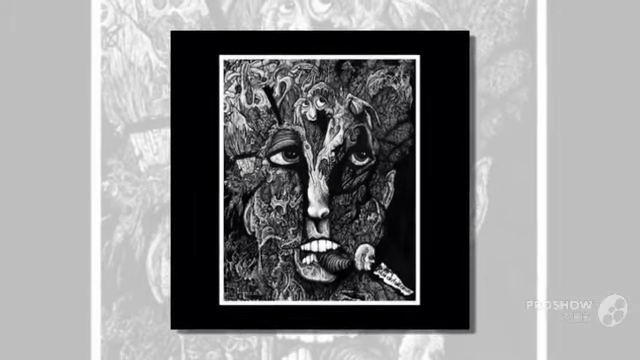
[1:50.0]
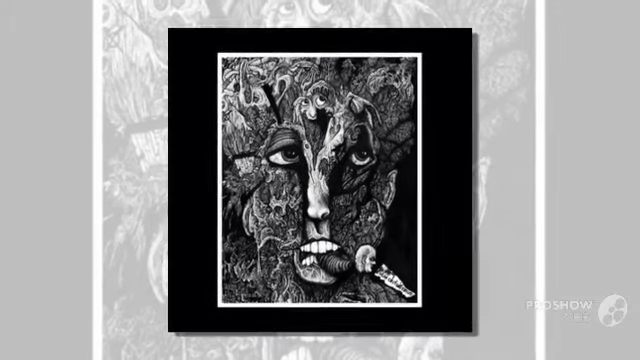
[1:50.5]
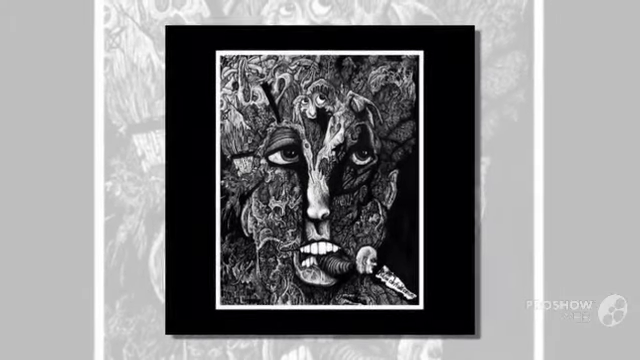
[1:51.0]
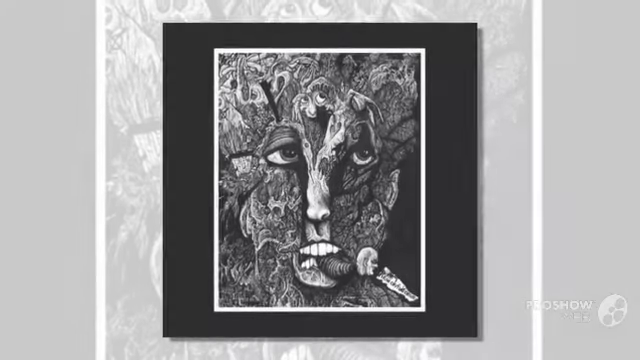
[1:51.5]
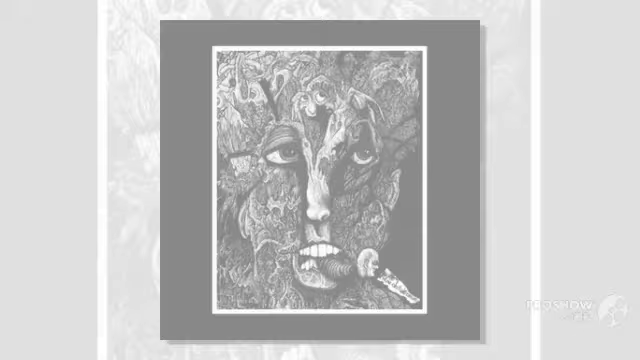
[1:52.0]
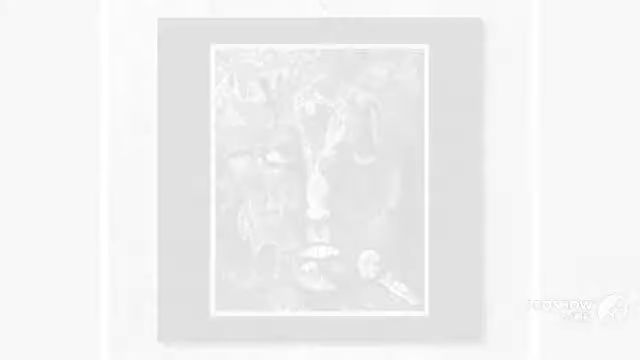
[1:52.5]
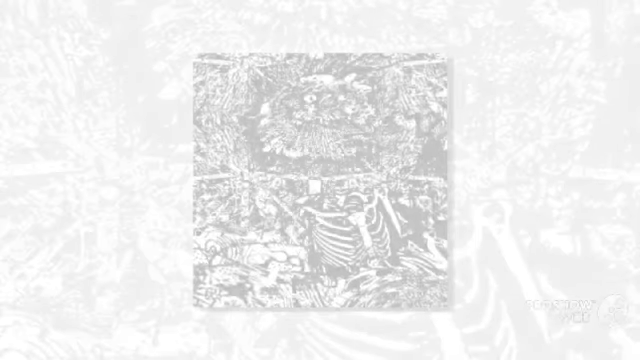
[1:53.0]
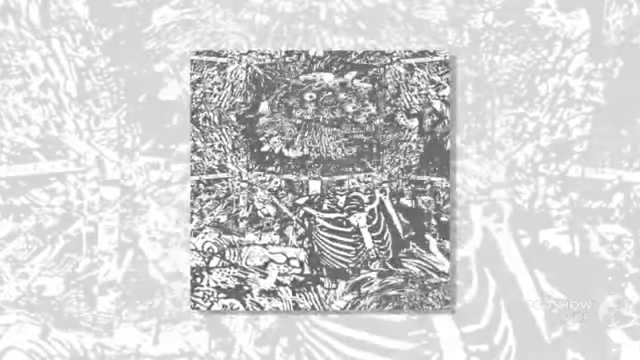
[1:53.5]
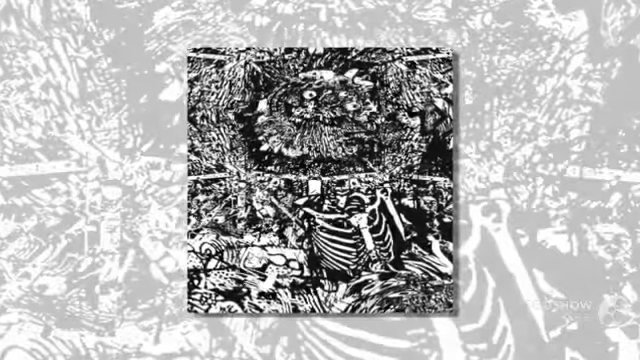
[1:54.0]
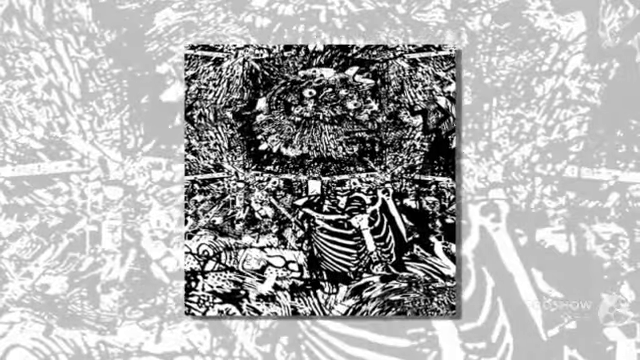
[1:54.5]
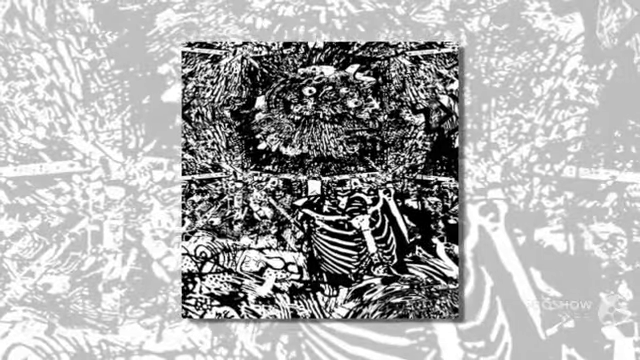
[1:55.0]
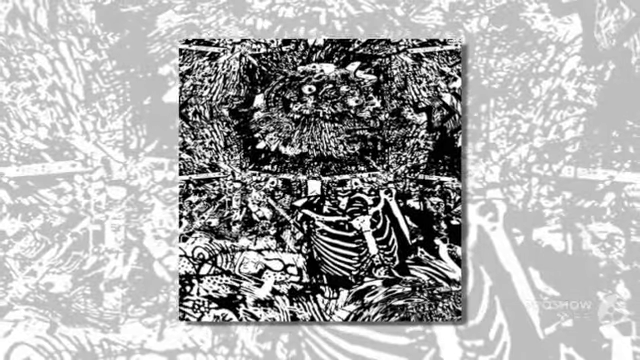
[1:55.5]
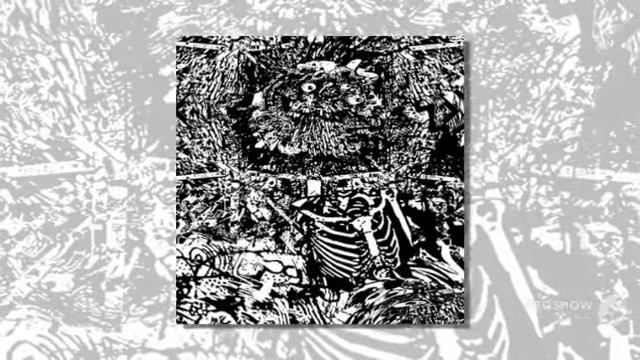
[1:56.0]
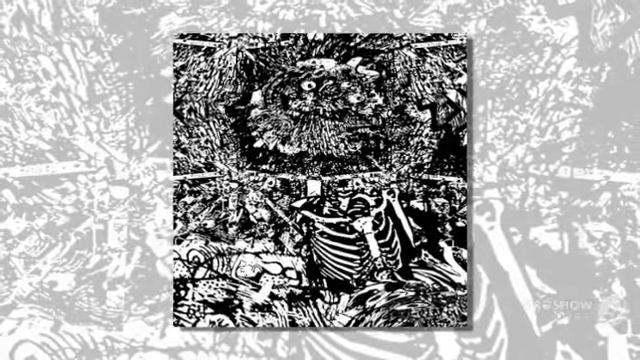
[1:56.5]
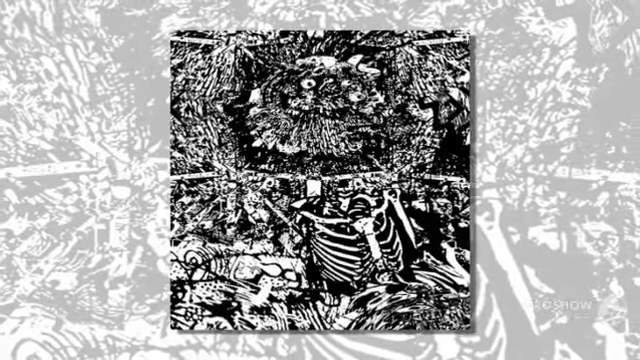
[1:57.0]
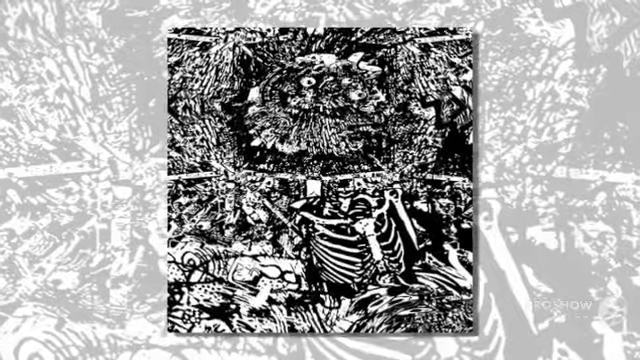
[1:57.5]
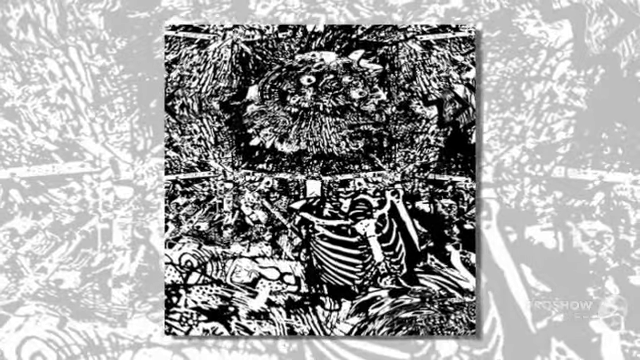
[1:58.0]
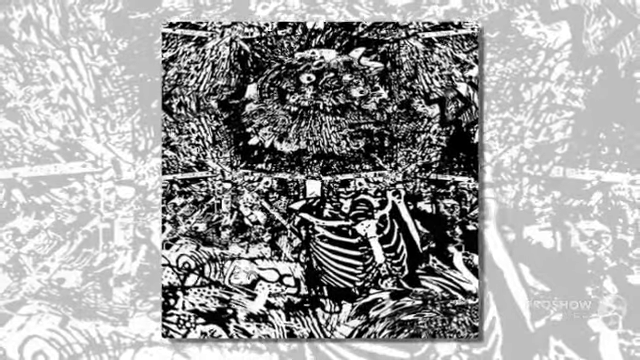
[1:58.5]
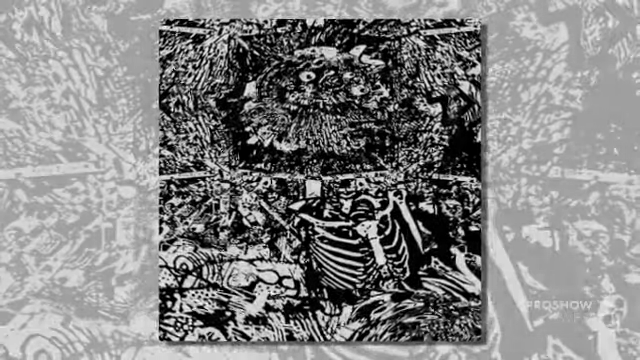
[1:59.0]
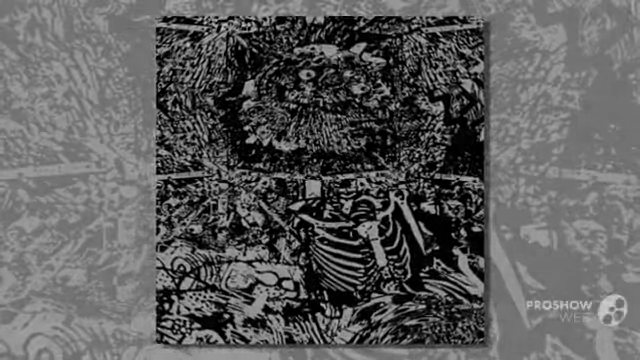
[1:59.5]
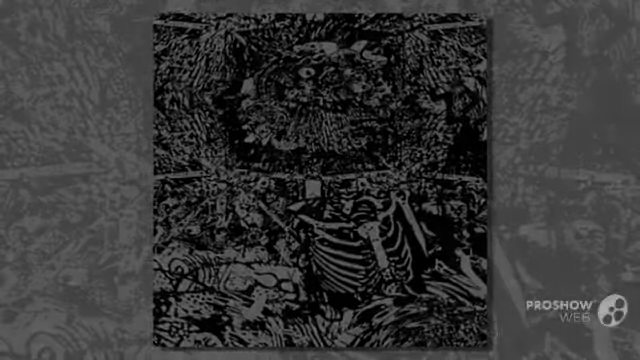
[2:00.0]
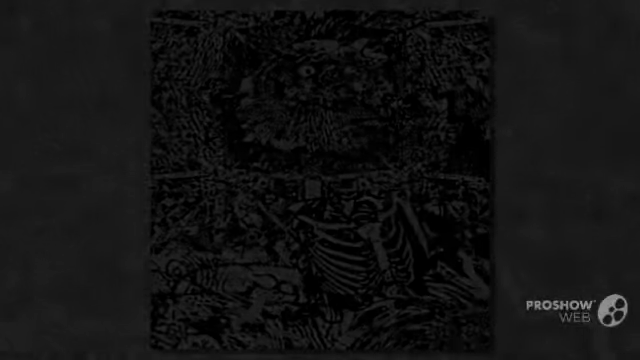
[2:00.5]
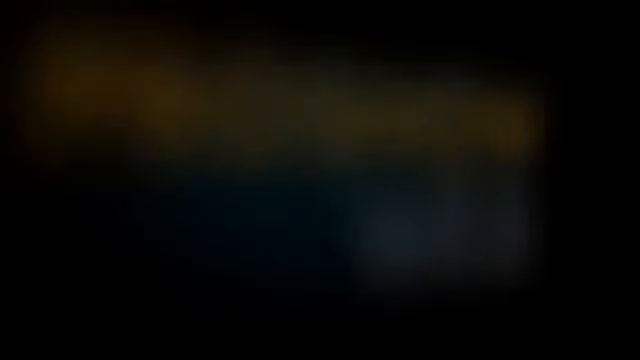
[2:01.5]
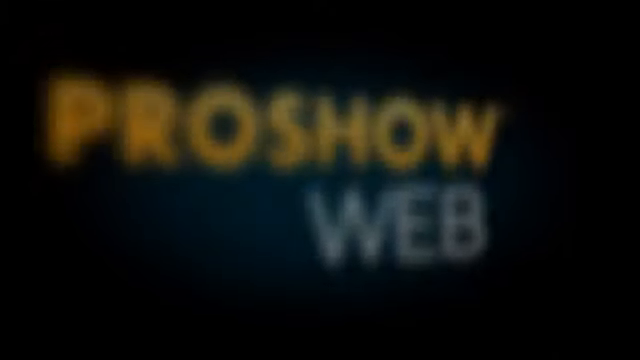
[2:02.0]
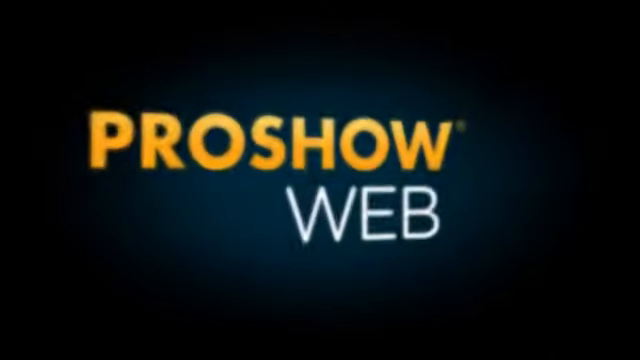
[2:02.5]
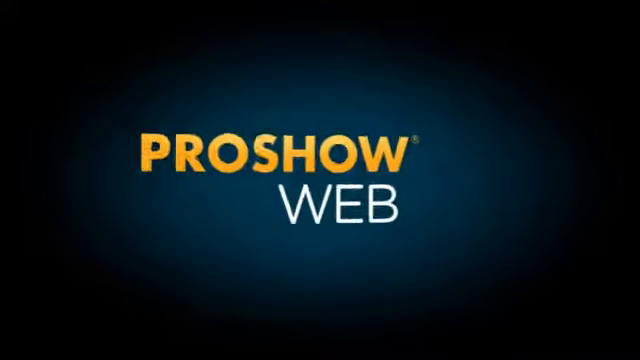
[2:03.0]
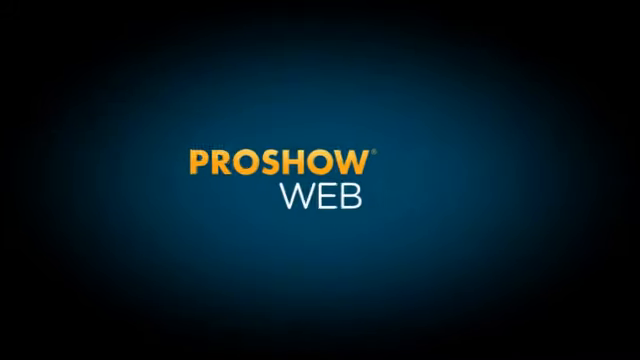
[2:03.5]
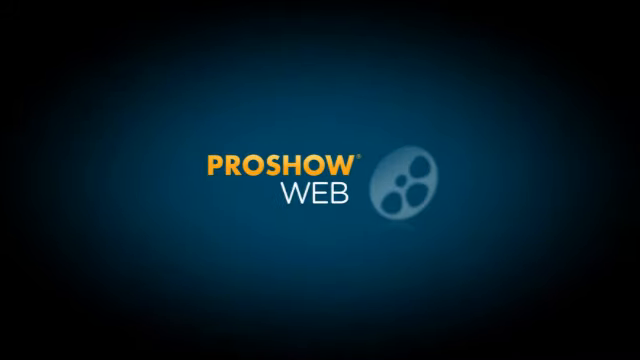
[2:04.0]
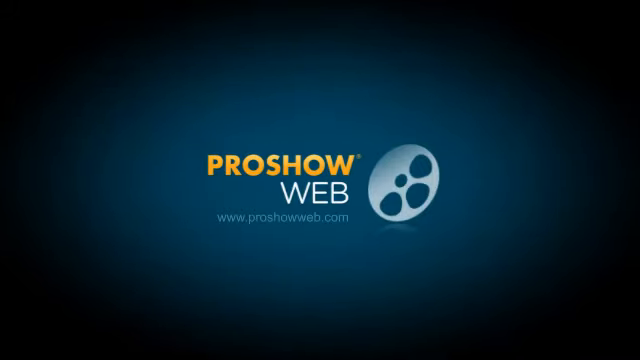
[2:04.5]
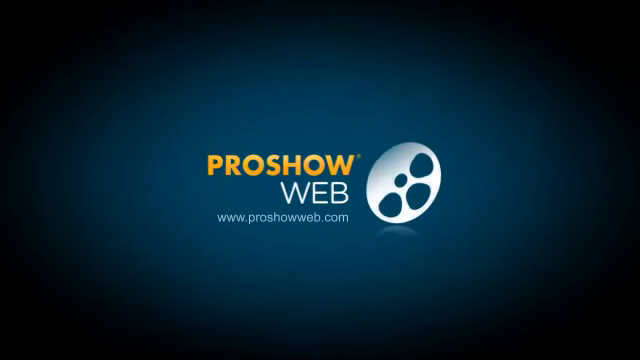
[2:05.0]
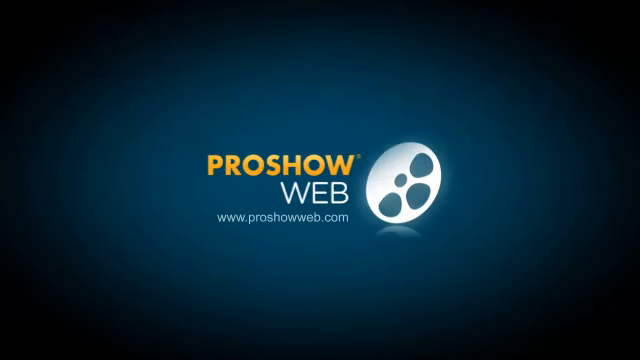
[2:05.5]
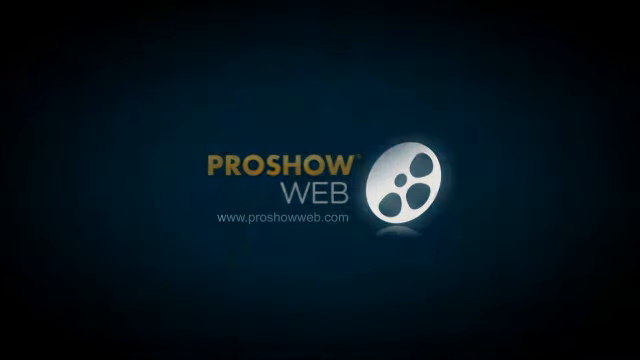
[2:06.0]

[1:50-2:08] A picture shows a person's face that seems to have been melted off: there is no smooth skin, just blisters and the muscles underneath. His teeth are still visible, but there are no lips. He is holding a little worm-like person with a human head that seems meant to represent a cigarette. A white screen transition leads to a grave with a skeleton torso visible in the bottom section and a head made out of eyeballs and bones in the top section. The head and eyeballs seem to be framed by something like a fireplace or a wall cut-out, with the skeleton torso sort of resting against the outside of it. The image fades to black, and a logo appears that says "pro show web" with a film reel to the right of it, and below the word "web" it says "www.proshowweb.com".